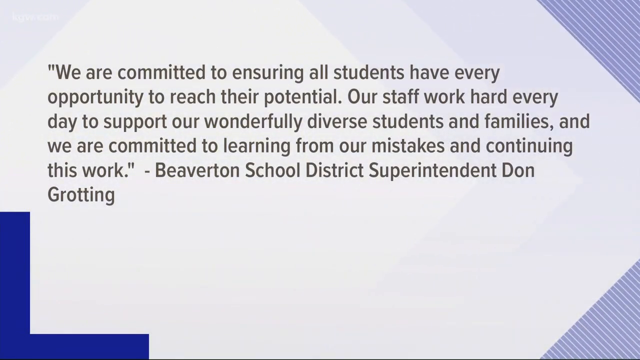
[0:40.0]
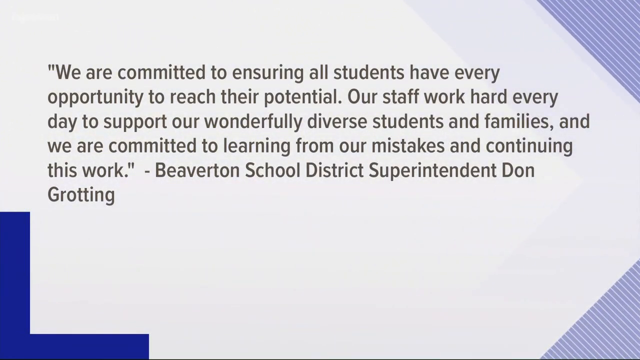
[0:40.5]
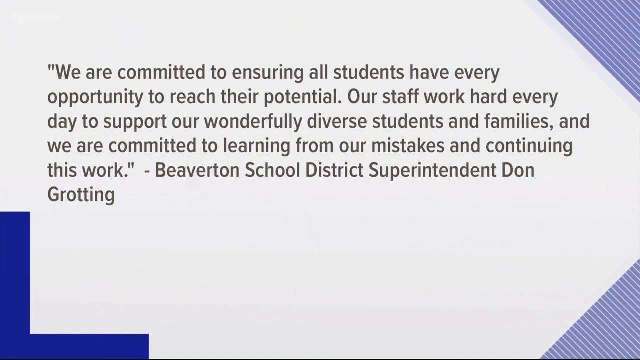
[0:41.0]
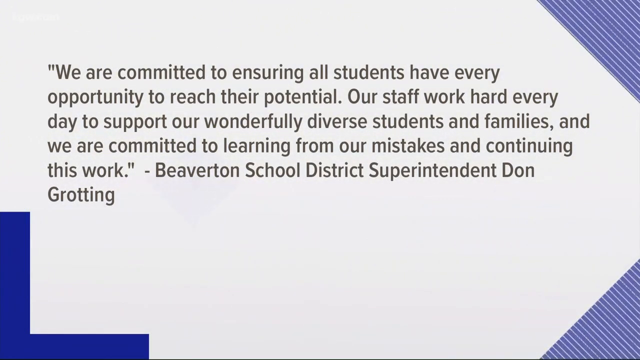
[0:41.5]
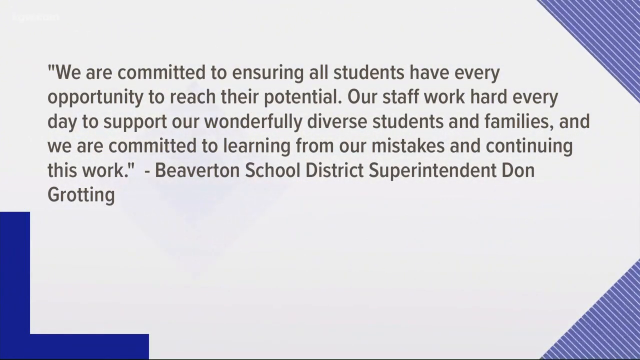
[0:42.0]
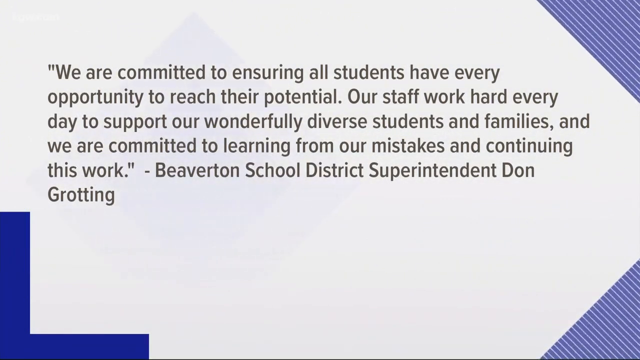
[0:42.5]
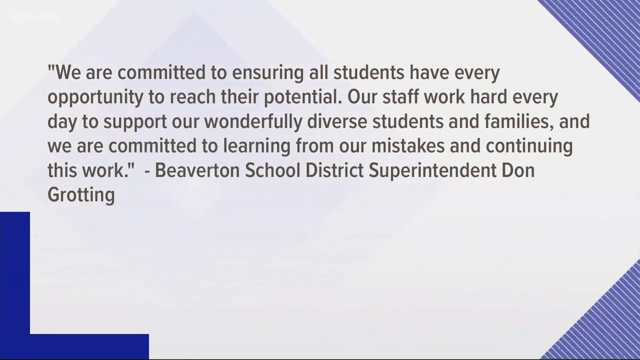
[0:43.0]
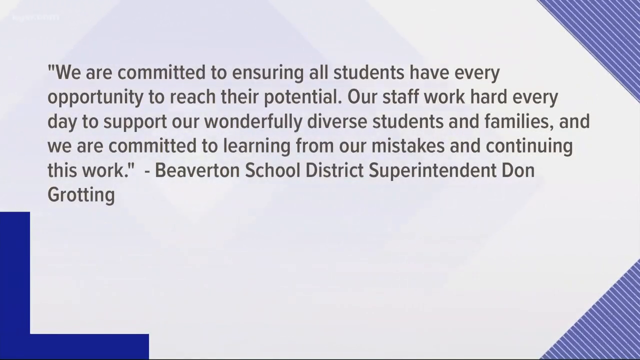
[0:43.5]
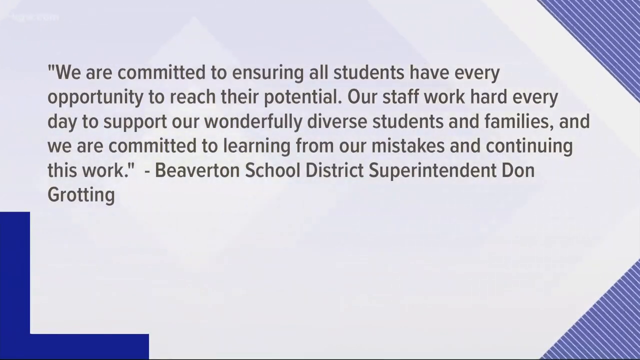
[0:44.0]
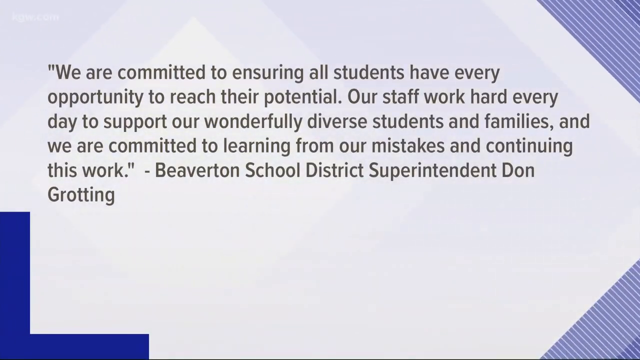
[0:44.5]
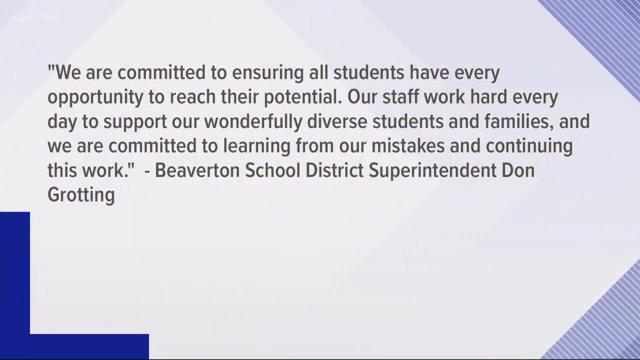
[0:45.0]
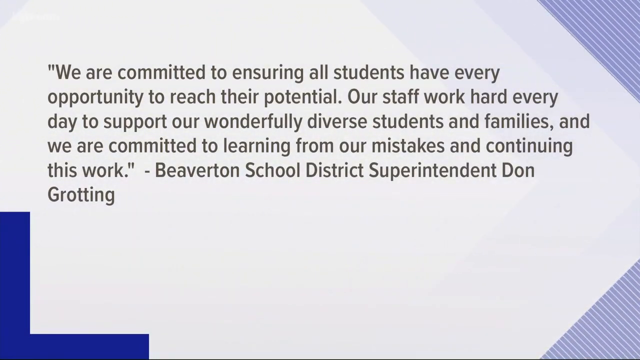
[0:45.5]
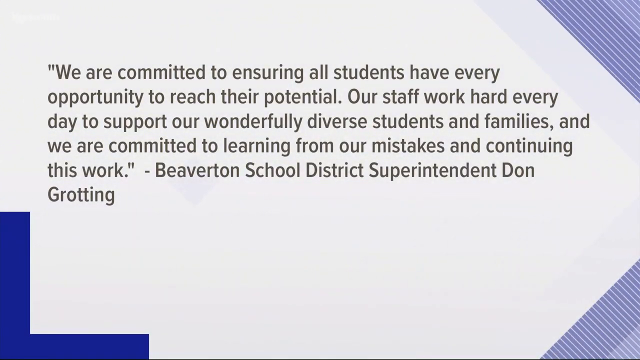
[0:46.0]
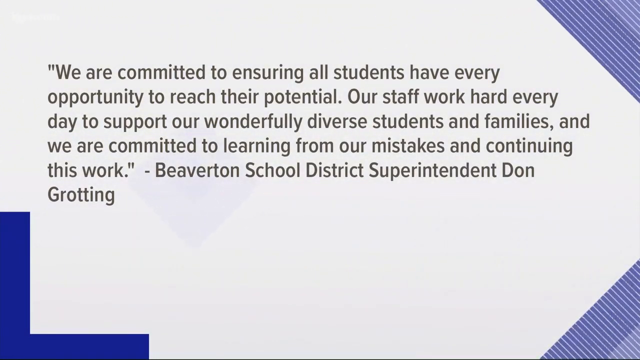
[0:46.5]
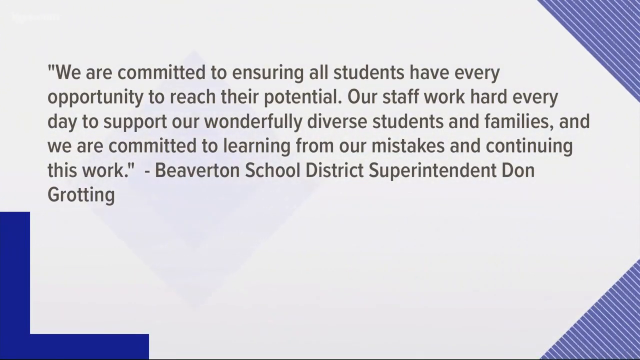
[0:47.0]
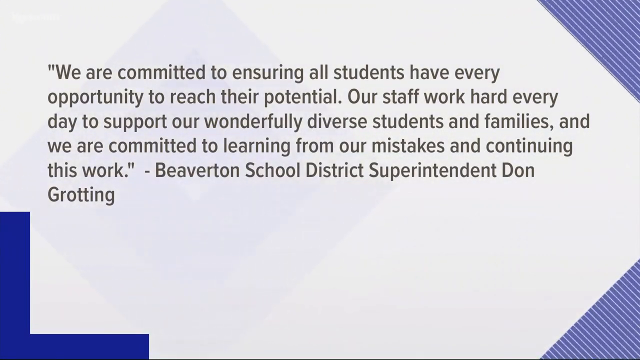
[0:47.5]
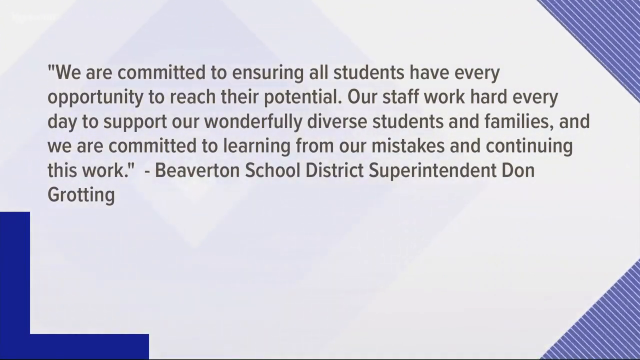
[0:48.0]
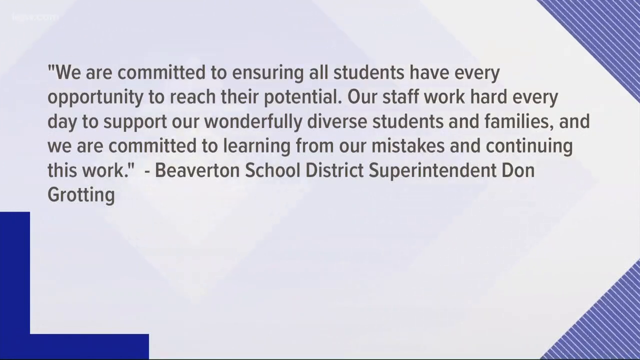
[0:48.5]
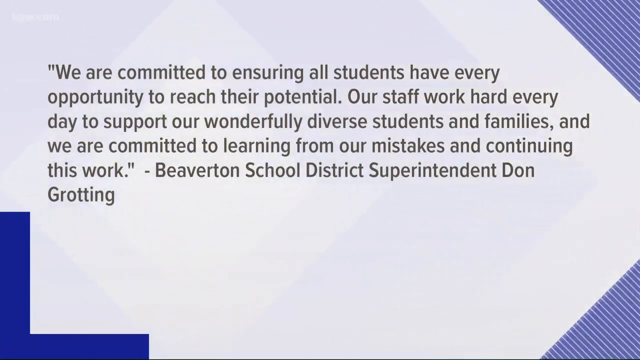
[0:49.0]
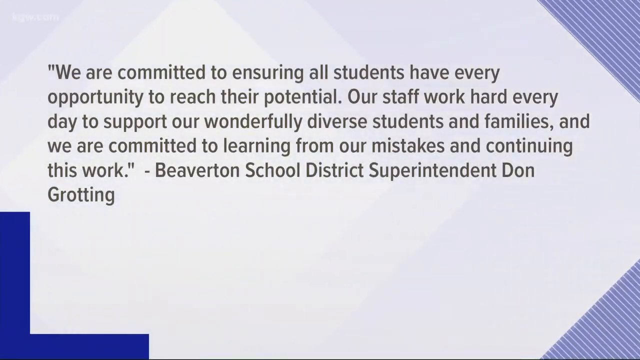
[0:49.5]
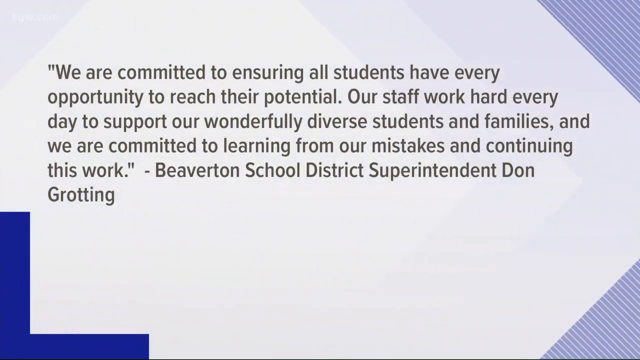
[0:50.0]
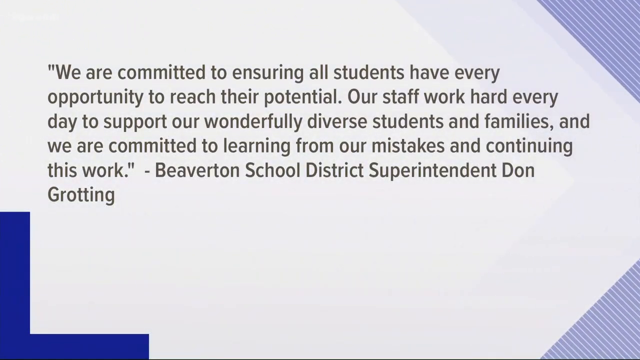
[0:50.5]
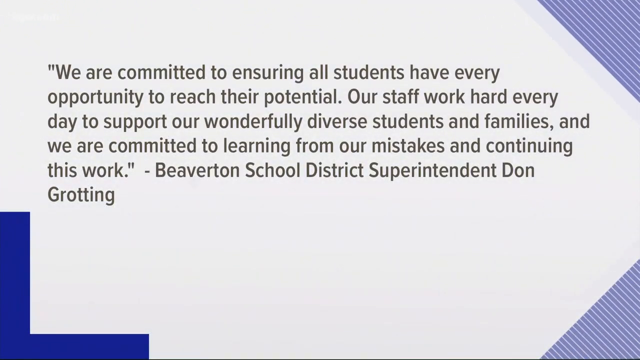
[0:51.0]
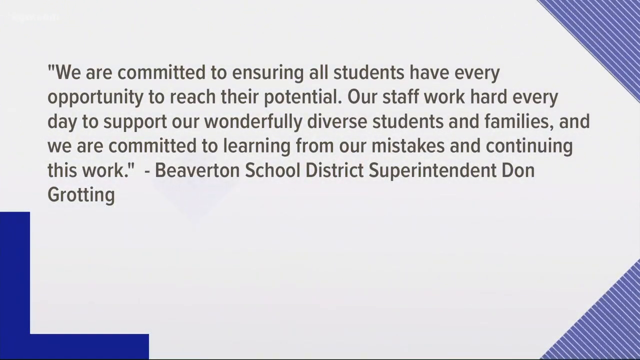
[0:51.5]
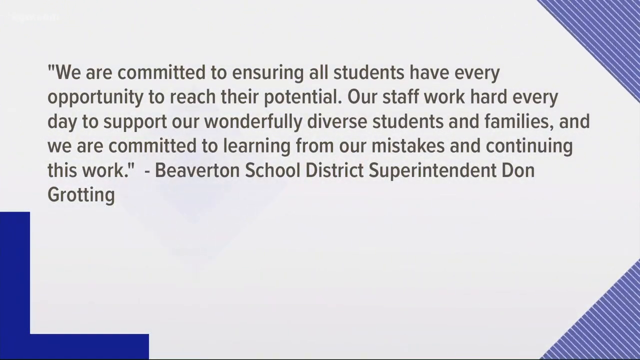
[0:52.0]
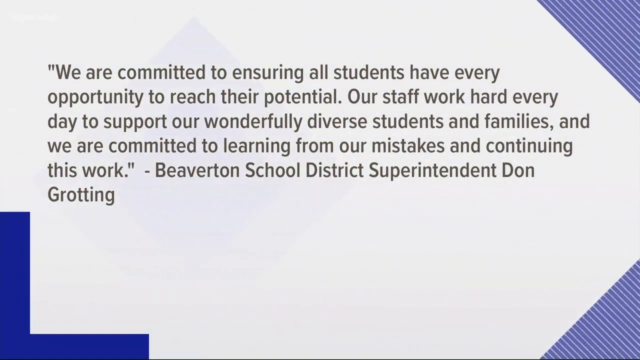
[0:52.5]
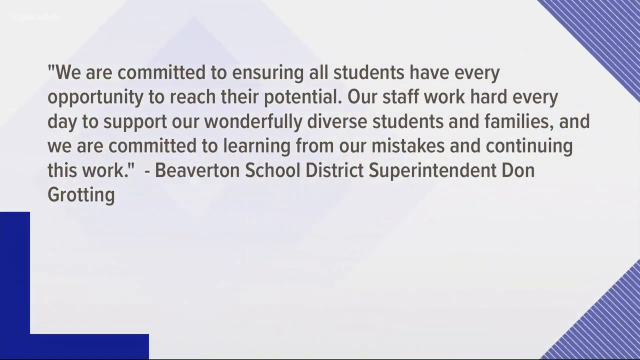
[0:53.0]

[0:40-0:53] A quote from Beaverton School District Superintendent Don Grotting reads "we are committed to ensuring all students have every opportunity to reach their potential. Our staff works hard every day to support our wonderfully diverse students and families. And we are committed to learning from our mistakes and continuing this work." The quote is on a white background with purple in the corners, and purple moves towards the camera.